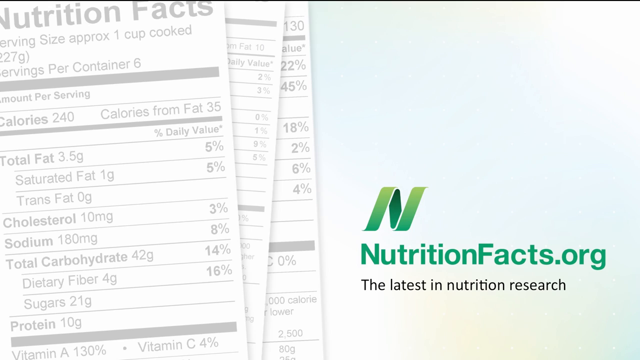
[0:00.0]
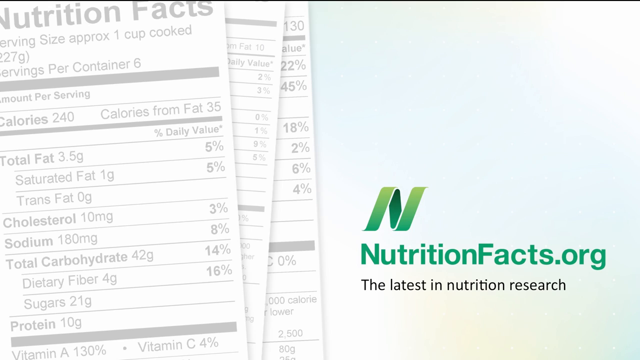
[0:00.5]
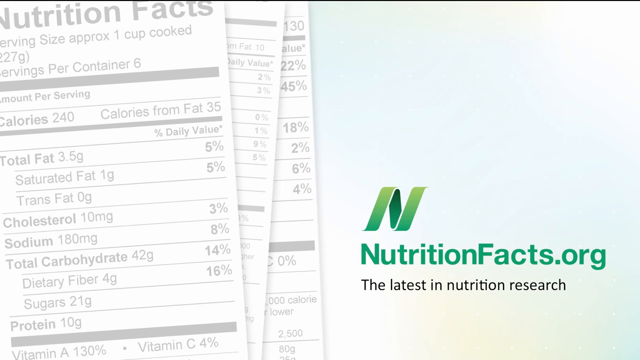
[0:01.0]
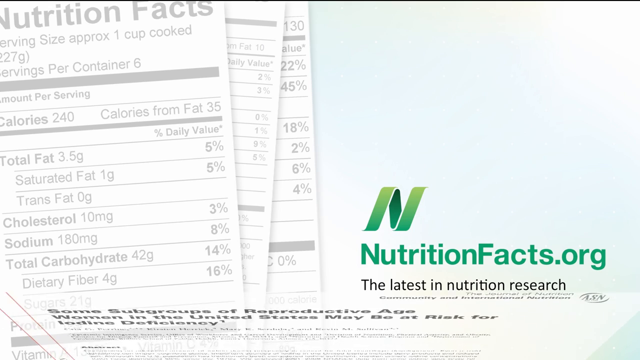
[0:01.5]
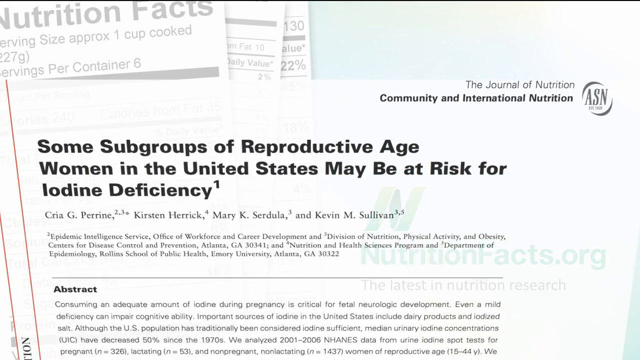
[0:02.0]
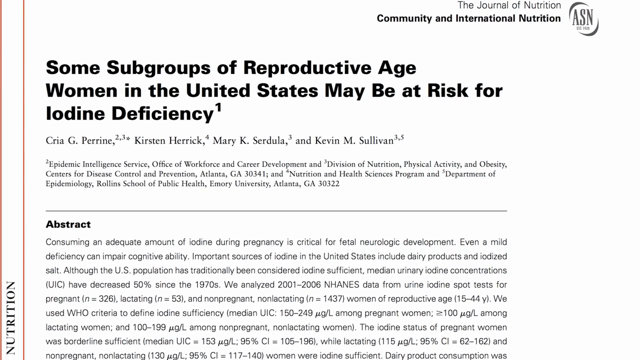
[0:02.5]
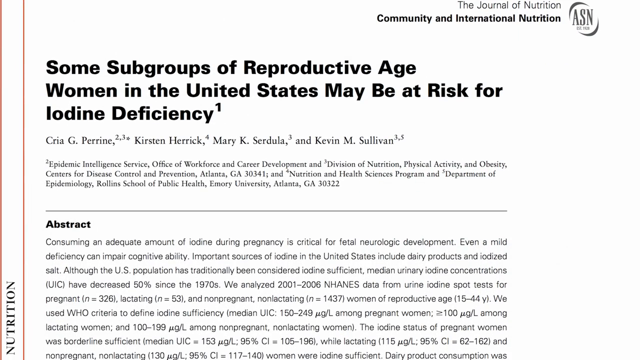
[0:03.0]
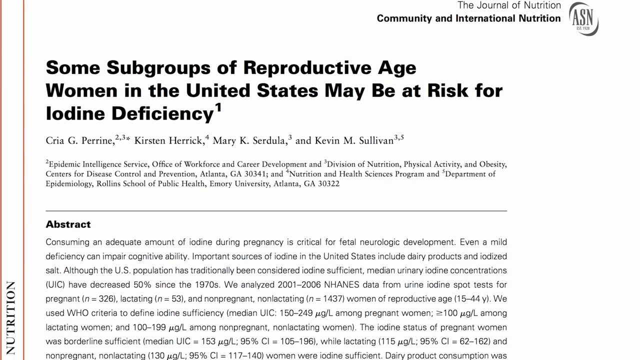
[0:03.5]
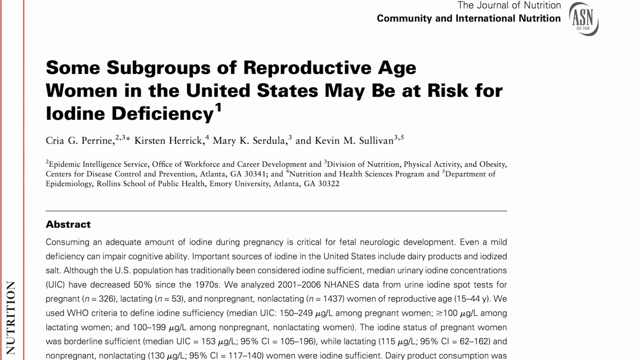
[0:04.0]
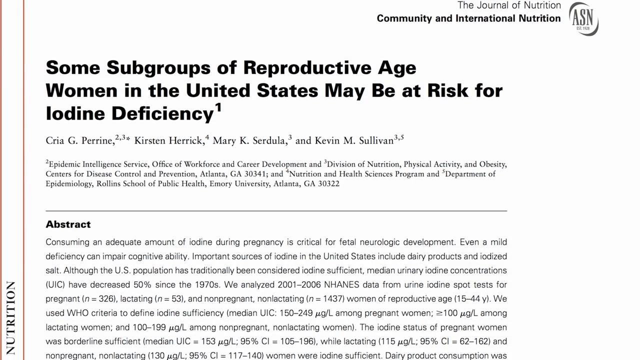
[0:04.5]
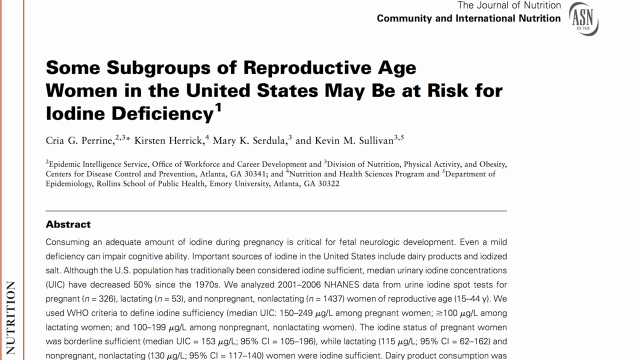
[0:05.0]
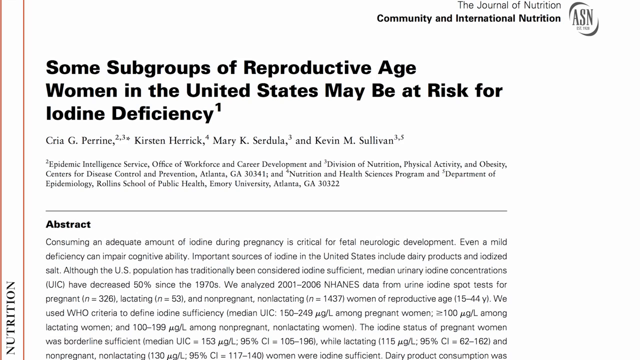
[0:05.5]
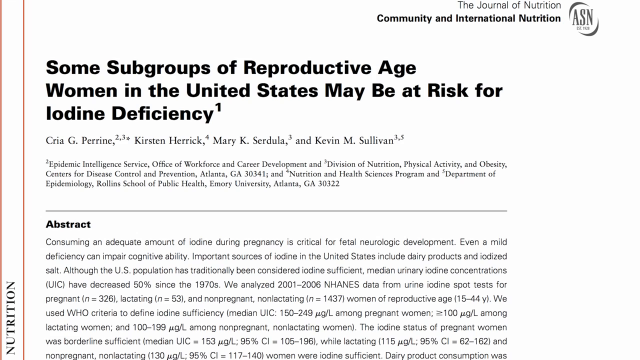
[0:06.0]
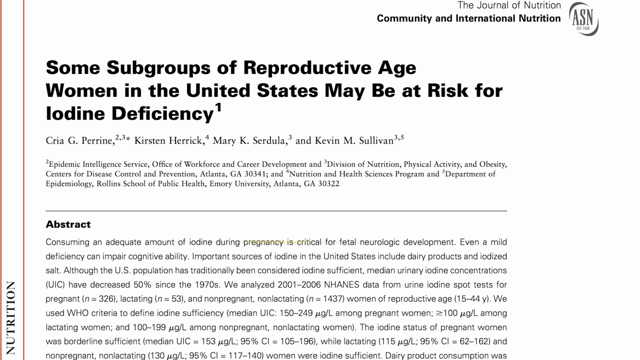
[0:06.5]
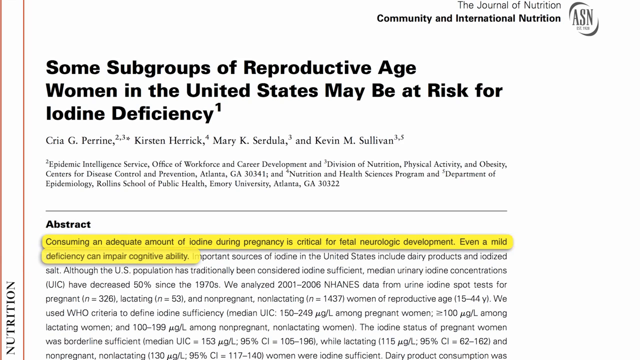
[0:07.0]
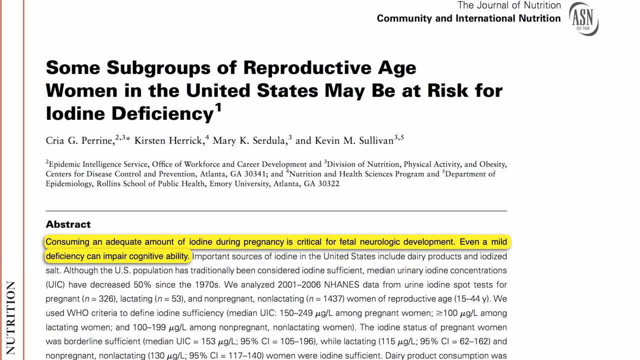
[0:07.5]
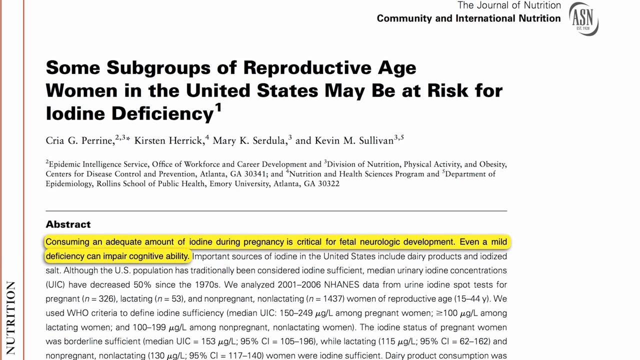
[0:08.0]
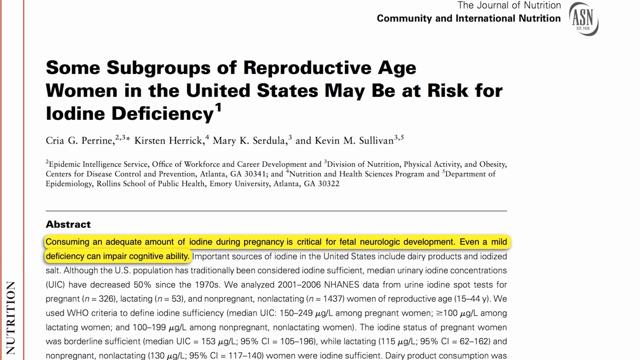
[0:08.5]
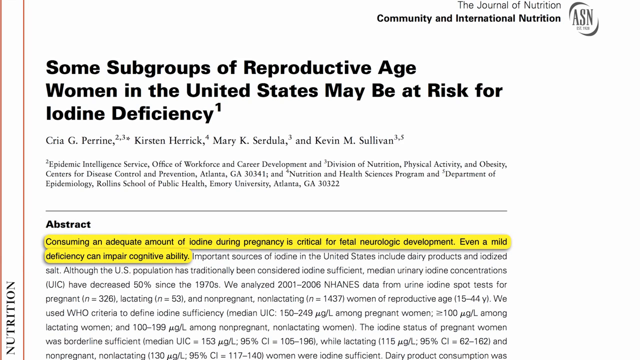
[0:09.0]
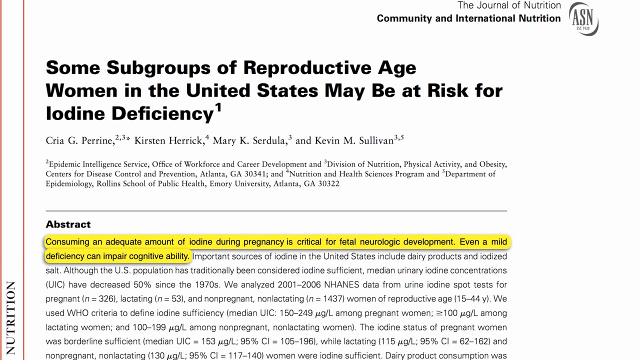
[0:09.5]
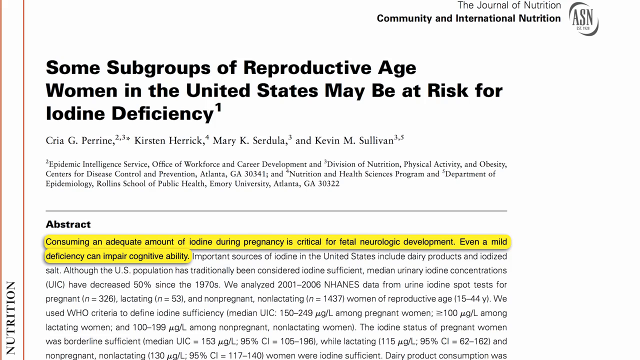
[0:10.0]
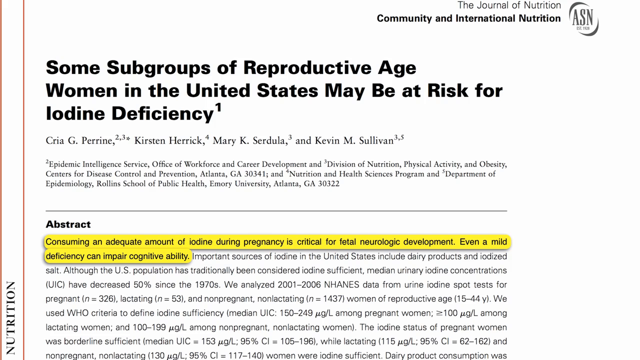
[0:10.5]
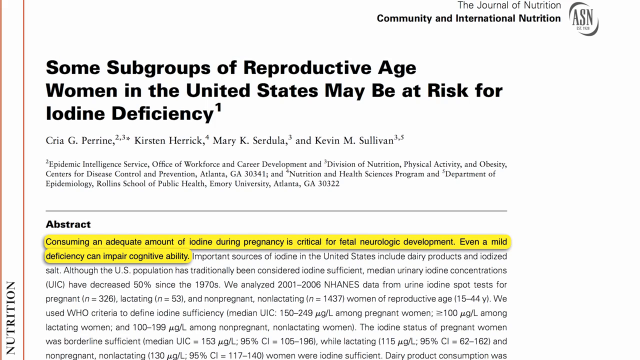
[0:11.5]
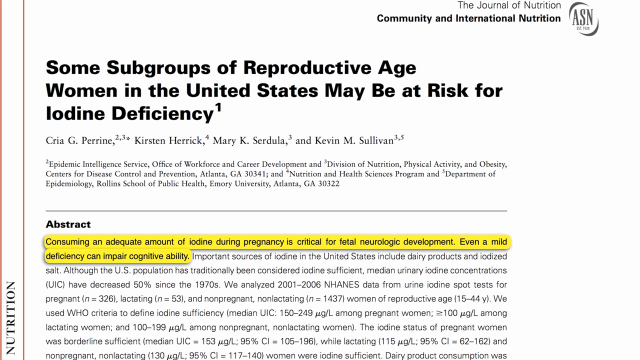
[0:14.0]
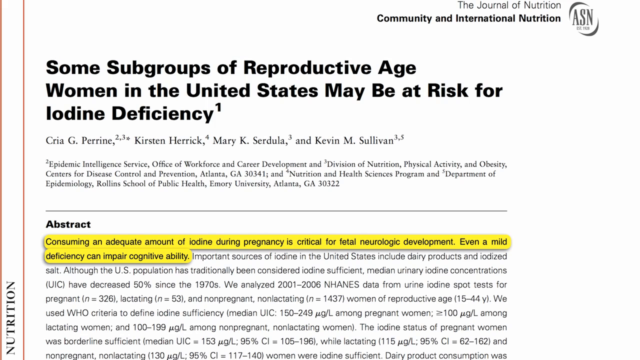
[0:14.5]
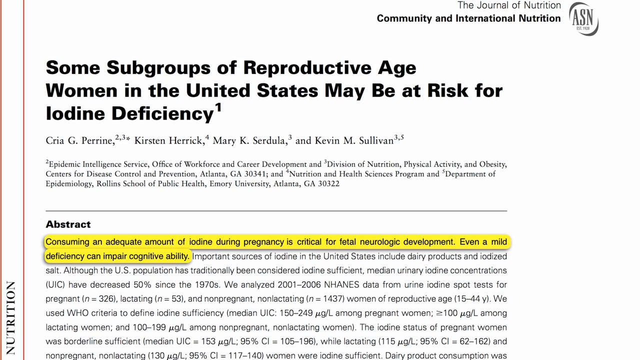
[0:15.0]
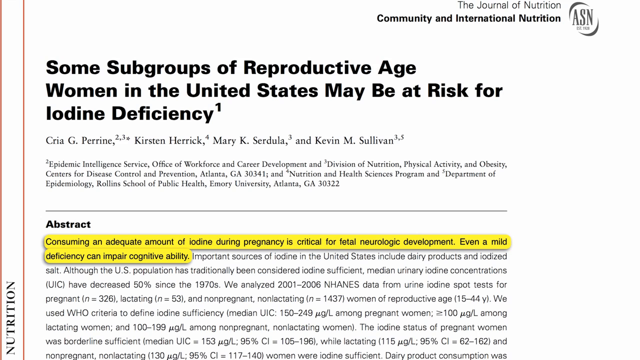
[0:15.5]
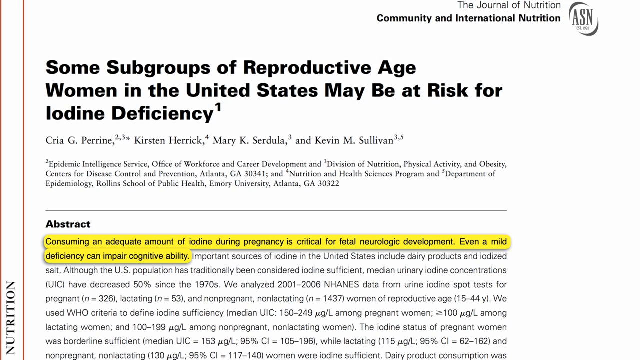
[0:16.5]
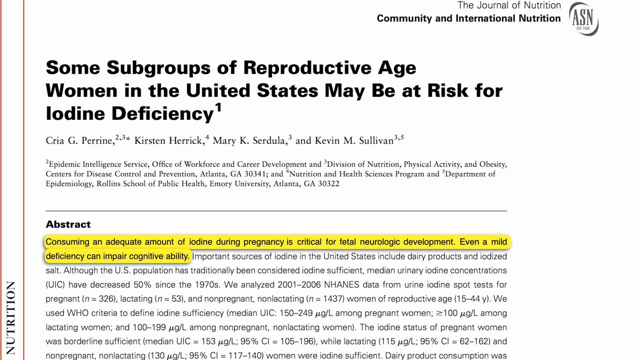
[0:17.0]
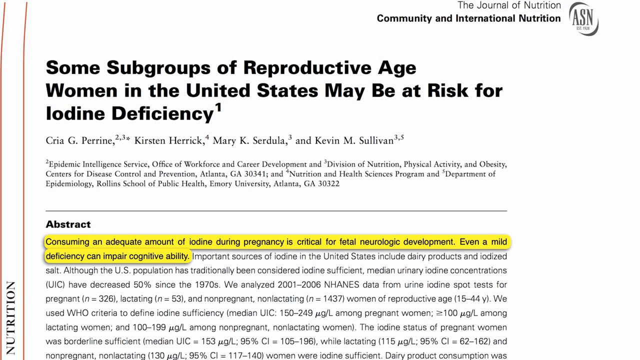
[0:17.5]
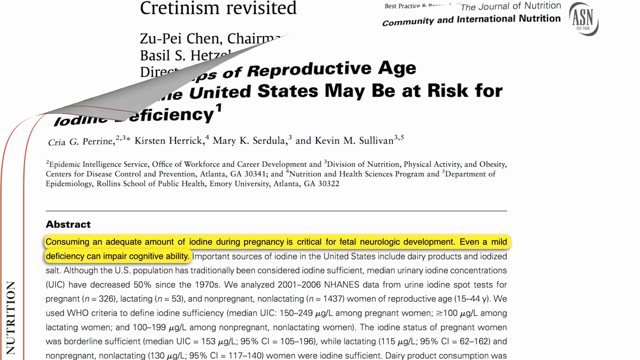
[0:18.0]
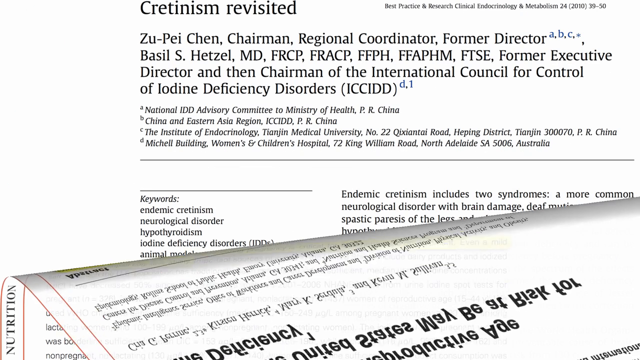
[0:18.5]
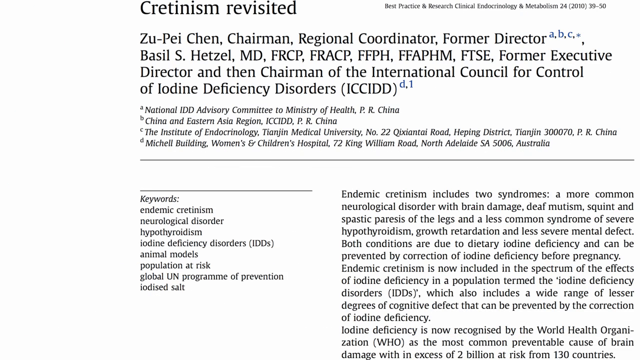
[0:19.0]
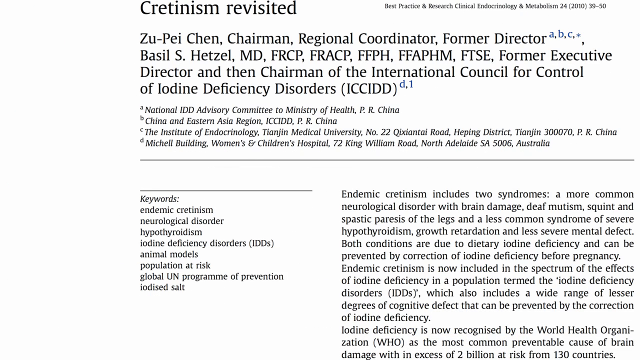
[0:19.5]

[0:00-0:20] The video opens with nutritionfacts.org on the right-hand side and nutrition facts stacked on the left-hand side. A page title is revealed that reads "some subgroups of reproductive age women in the United States may be at risk for iodine deficiency." At the top it says "the Journal of Nutrition Community and International Nutrition." The top of the page, an abstract, is then highlighted; it reads "consuming an adequate amount of iodine during pregnancy is critical for fetal neurologic development. Even a mild deficiency can impair cognitive ability. Important sources of iodine in the United States include dairy products and iodized salt." The page then changes to another page listing people who are part of the ICCIDD. It has a large title with many names, smaller italicized text beneath it, and below that two columns: one with keywords and the other breaking down the definitions of the terms in the first column.